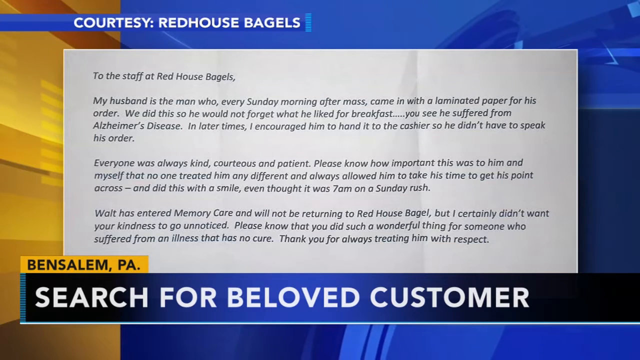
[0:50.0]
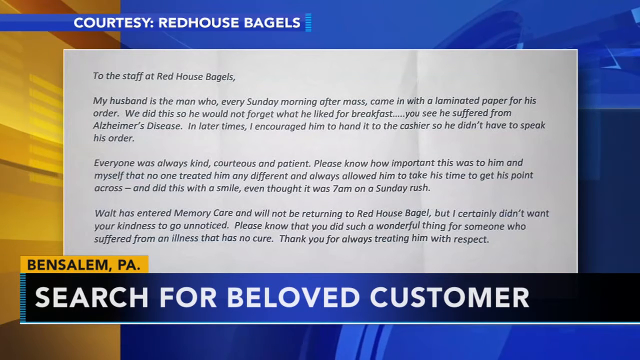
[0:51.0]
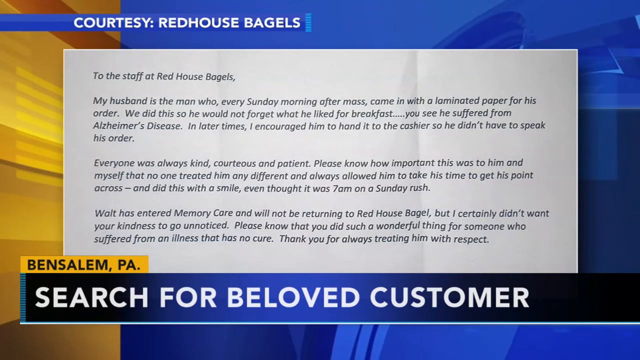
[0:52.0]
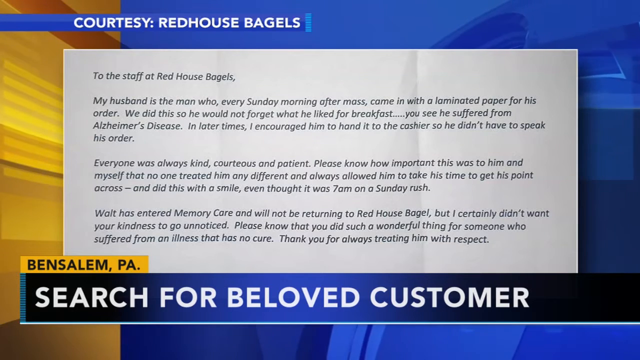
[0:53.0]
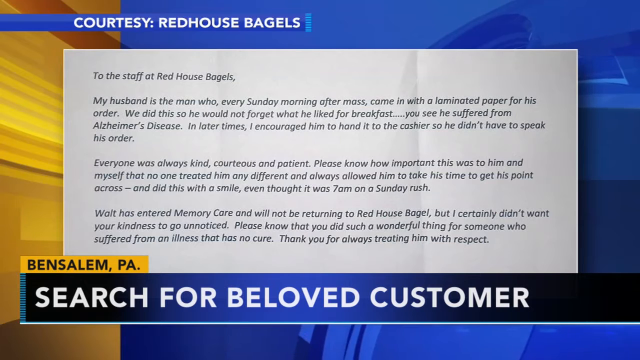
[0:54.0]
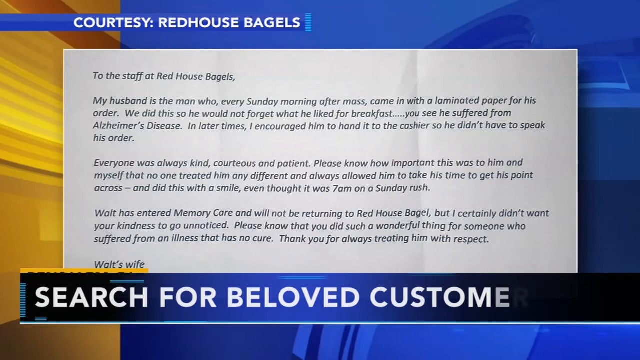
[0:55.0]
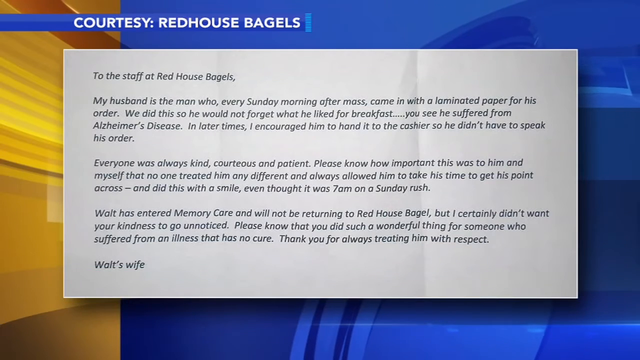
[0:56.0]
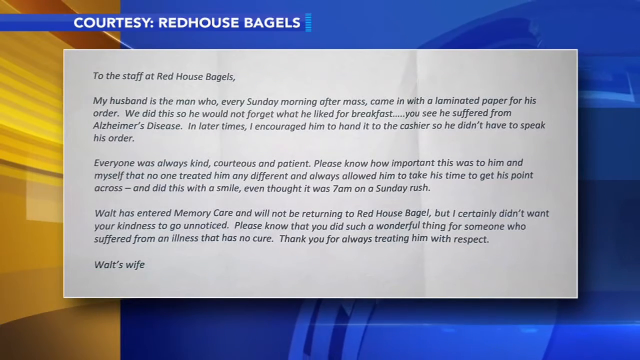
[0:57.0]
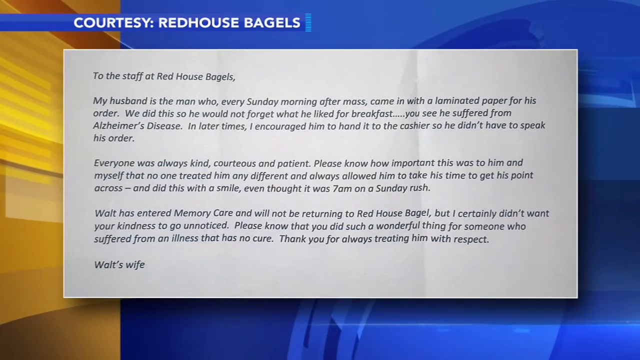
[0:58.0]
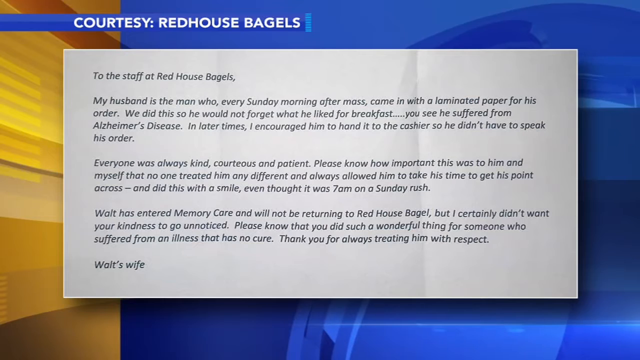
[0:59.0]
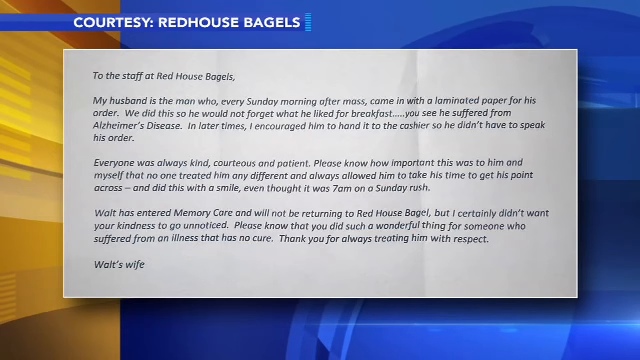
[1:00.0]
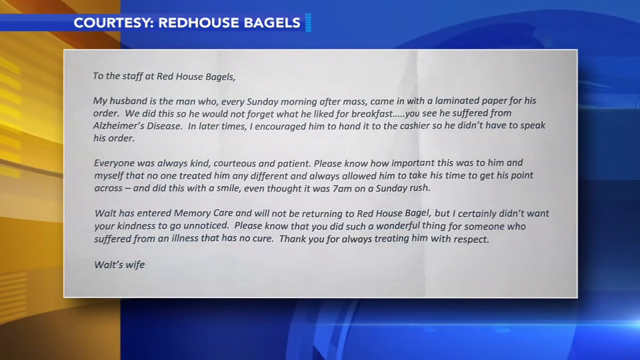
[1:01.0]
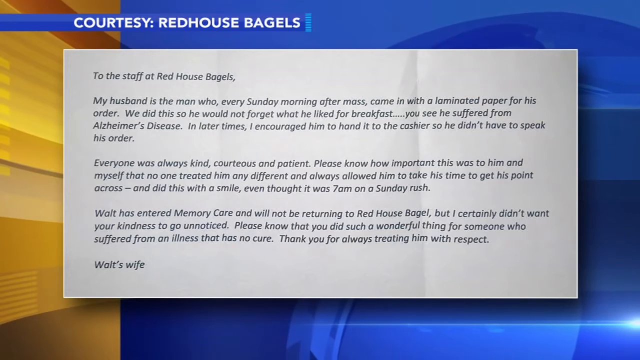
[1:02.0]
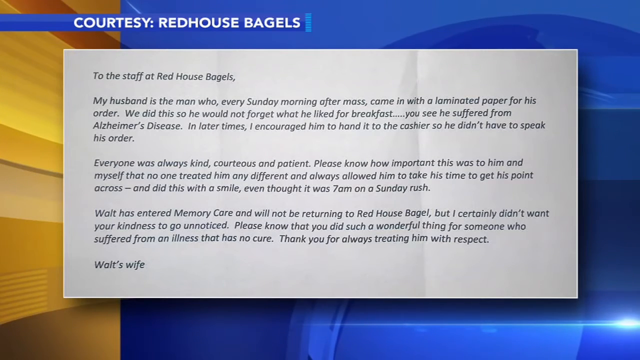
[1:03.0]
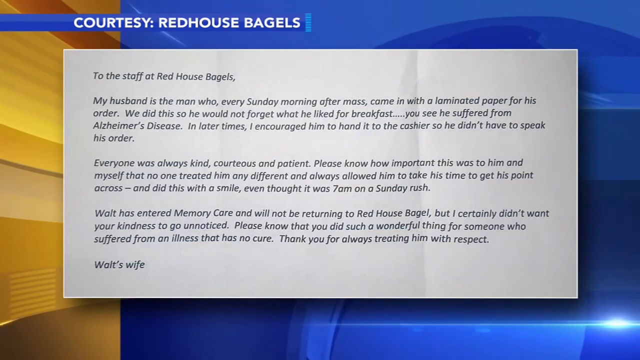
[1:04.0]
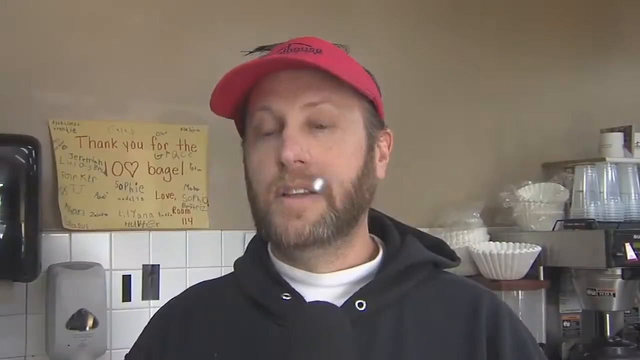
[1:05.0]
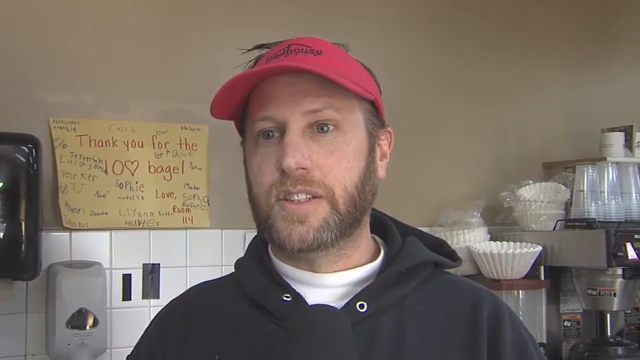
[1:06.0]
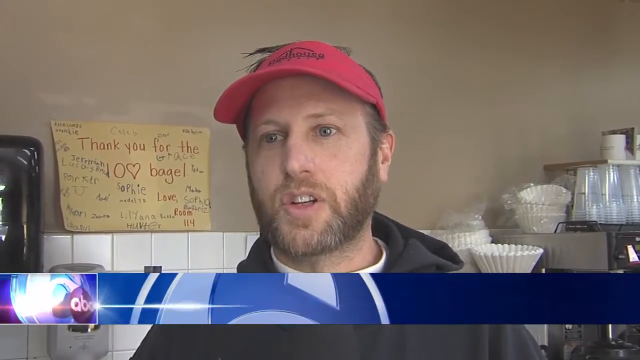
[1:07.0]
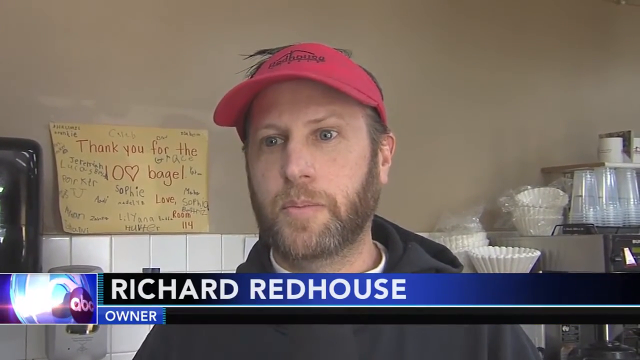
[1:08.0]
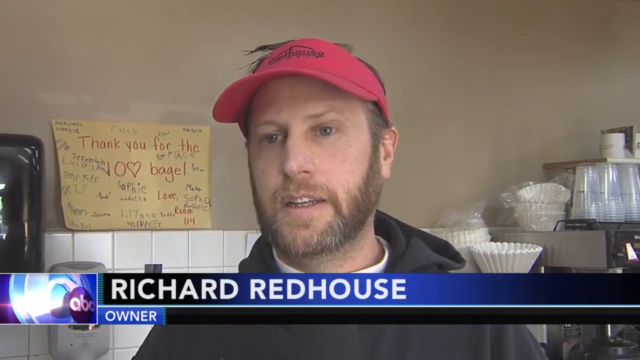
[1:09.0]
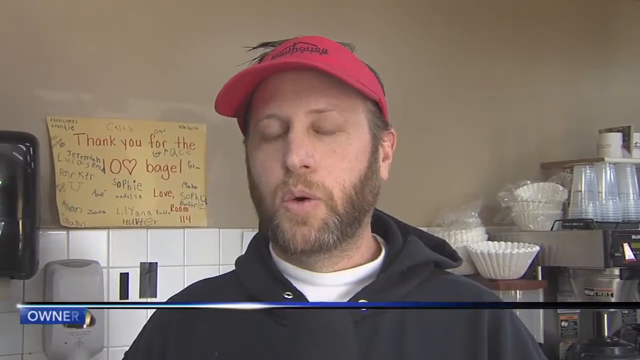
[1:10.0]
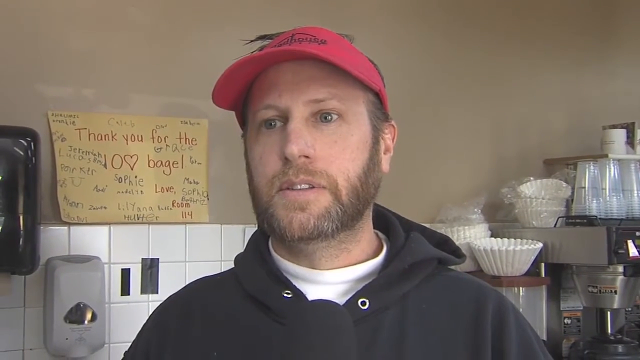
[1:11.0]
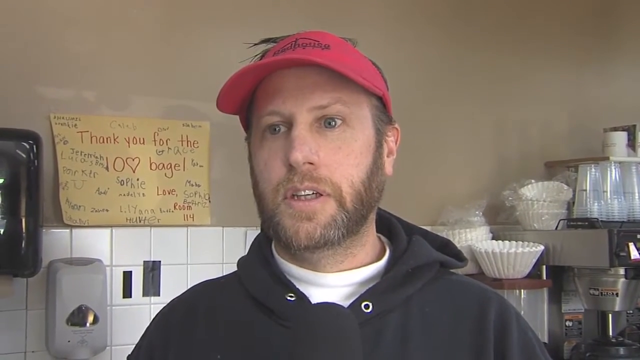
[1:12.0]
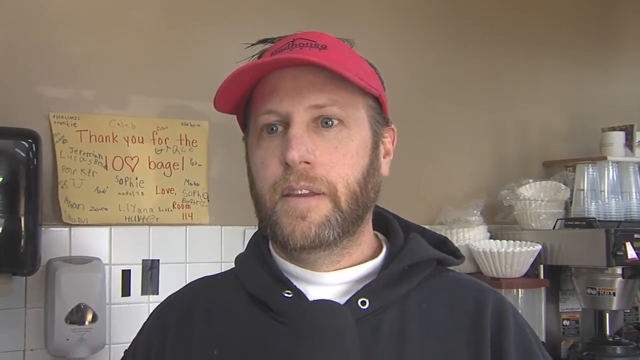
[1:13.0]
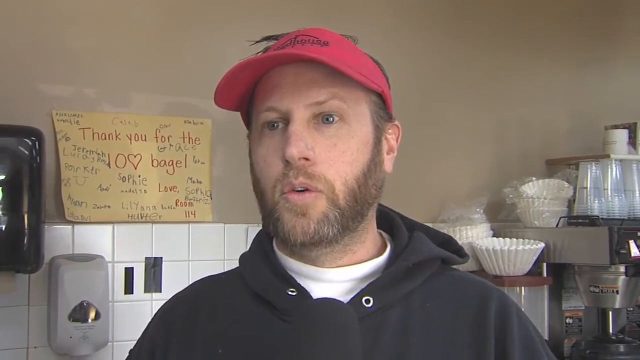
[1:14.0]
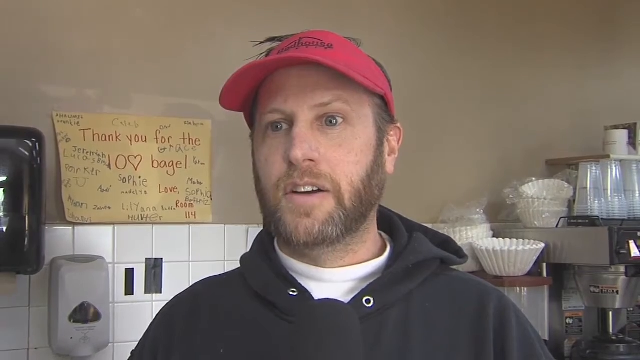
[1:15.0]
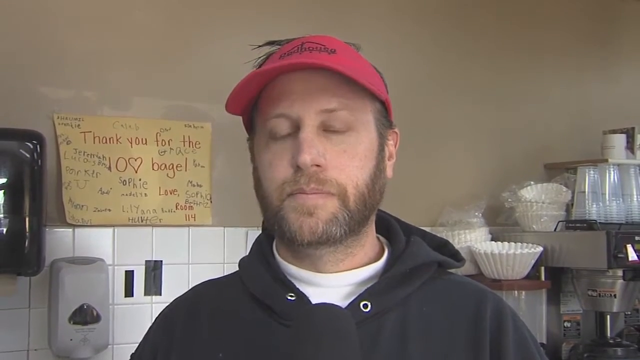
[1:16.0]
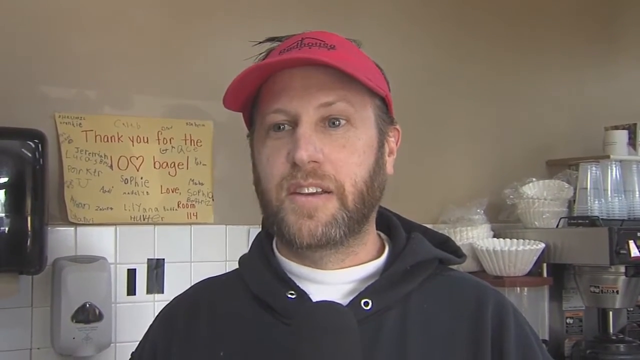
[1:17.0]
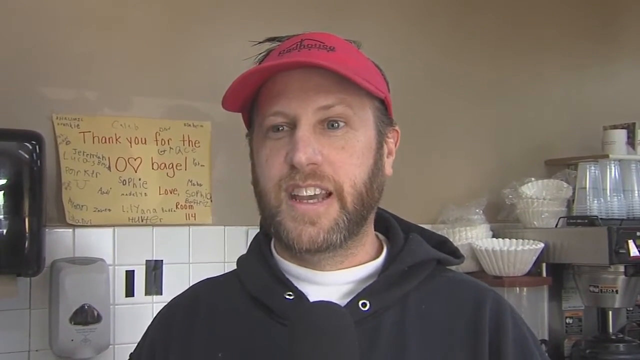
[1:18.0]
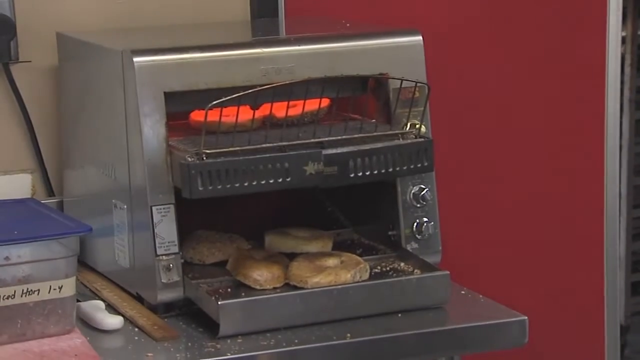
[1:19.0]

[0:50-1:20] A screenshot of a letter addressed to the staff at Red House Bagels is shown; it comes from a wife writing about her husband having Alzheimer's disease and being a regular at the business. At the bottom of the letter is the caption "Search for beloved customer." Then a white man with a red hat and a beard is talking inside the bagel business, with lots of coffee filters and lots of cups behind him. Behind him there is also a yellow sign that says "thank you for the bagel."